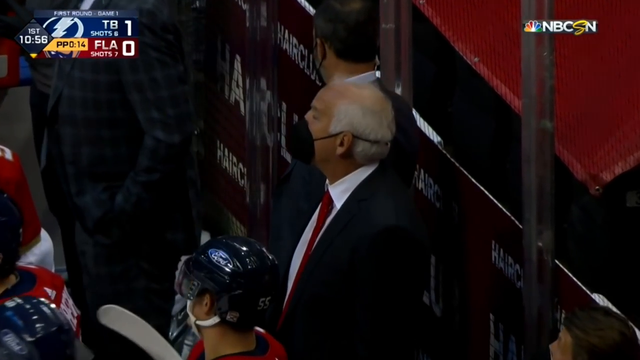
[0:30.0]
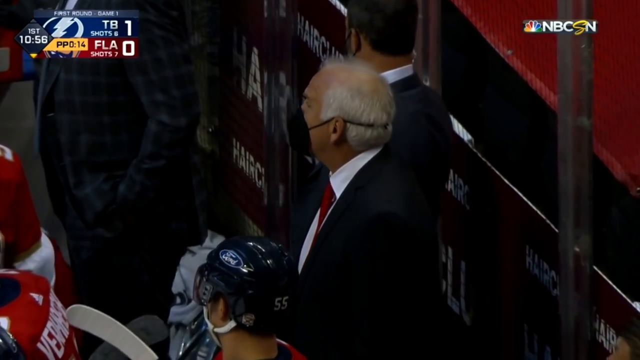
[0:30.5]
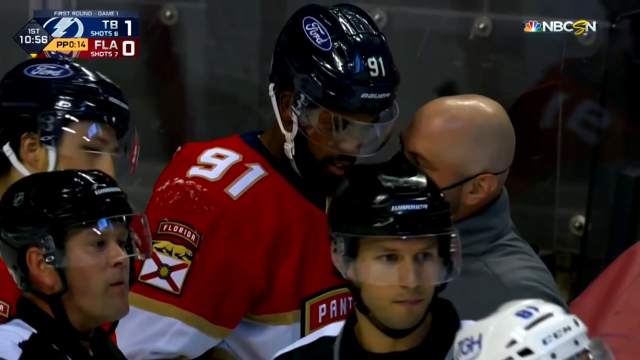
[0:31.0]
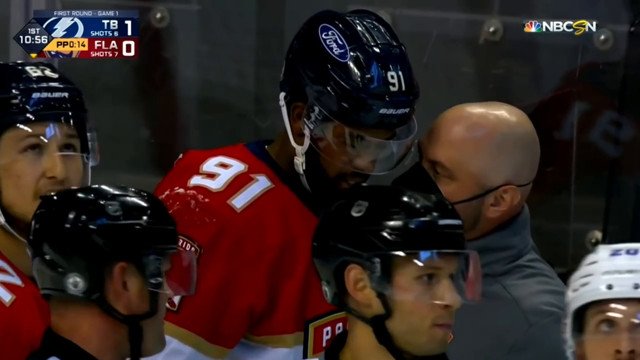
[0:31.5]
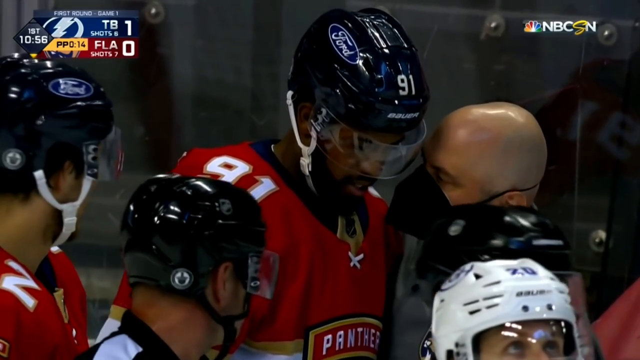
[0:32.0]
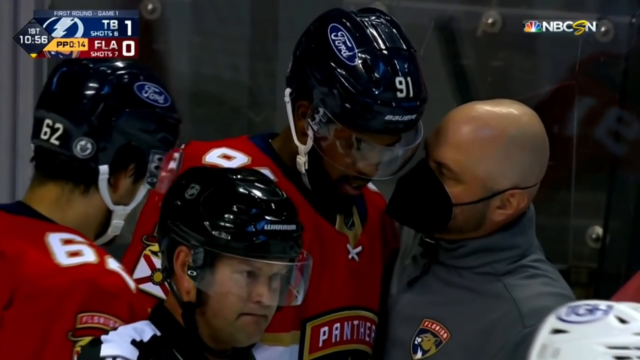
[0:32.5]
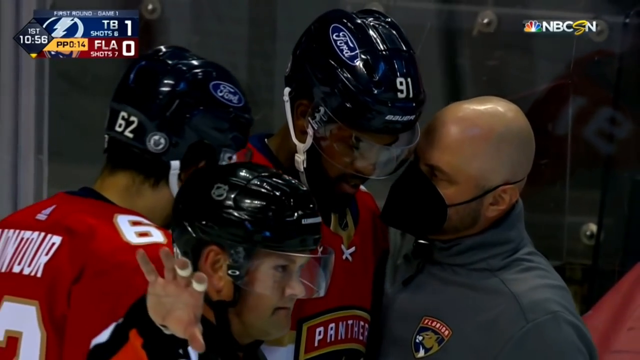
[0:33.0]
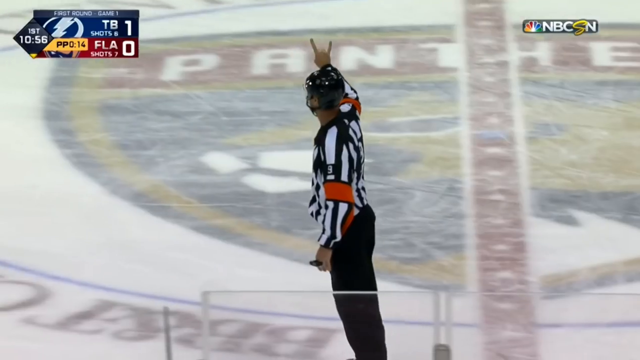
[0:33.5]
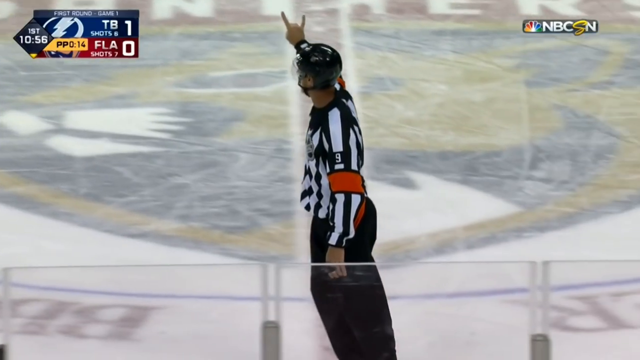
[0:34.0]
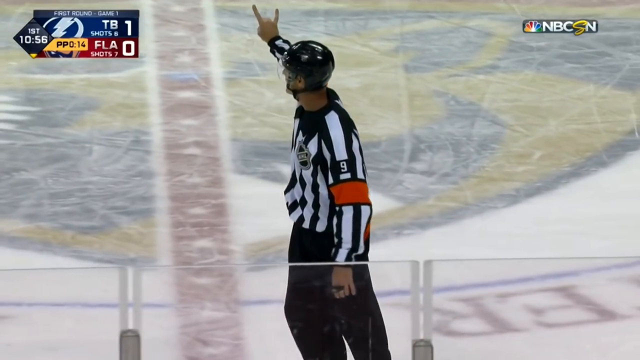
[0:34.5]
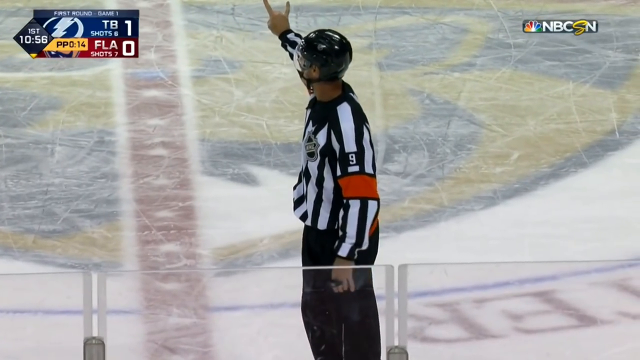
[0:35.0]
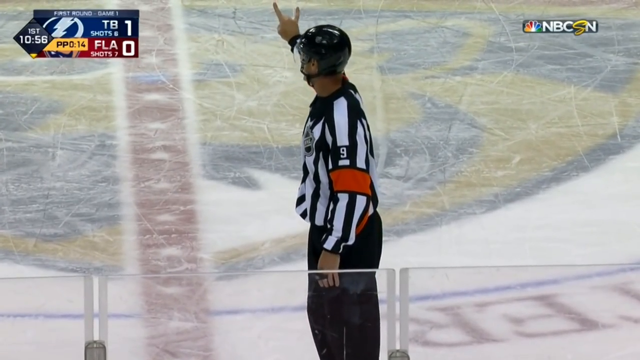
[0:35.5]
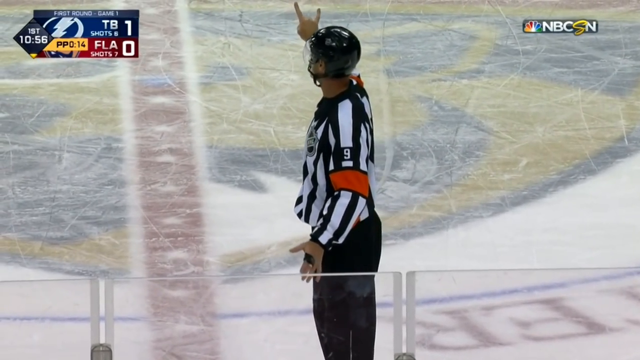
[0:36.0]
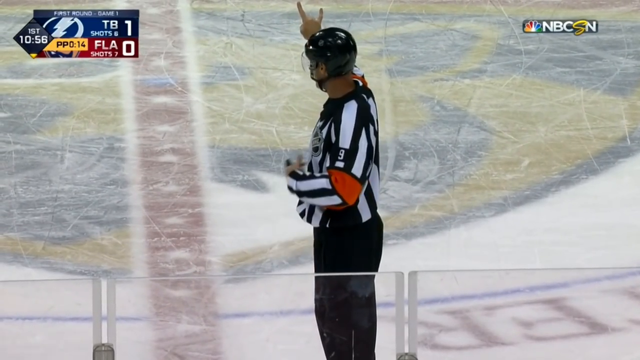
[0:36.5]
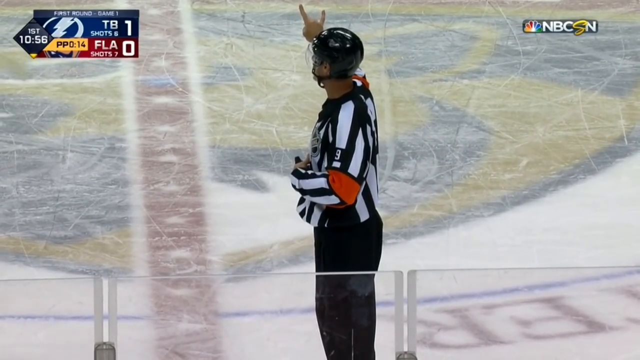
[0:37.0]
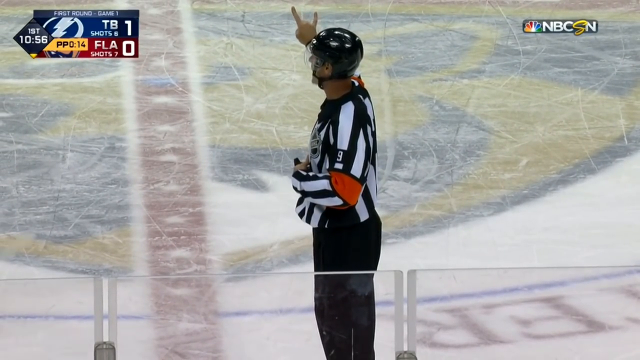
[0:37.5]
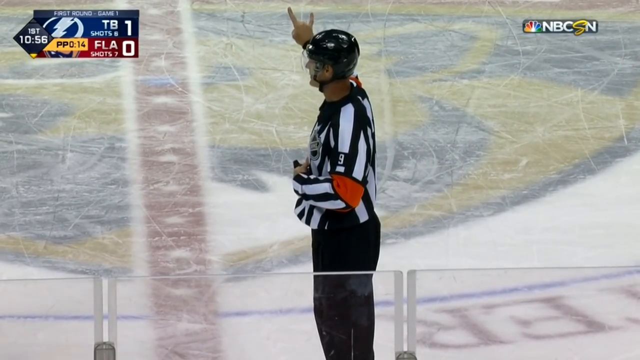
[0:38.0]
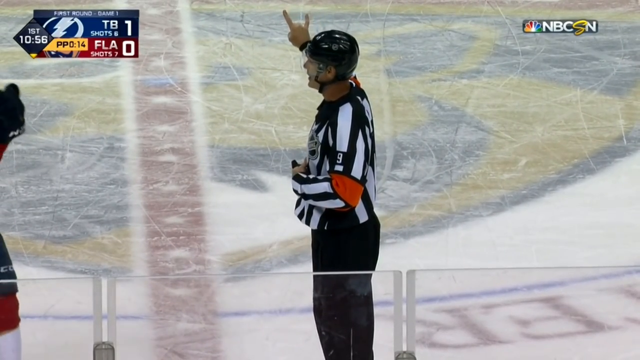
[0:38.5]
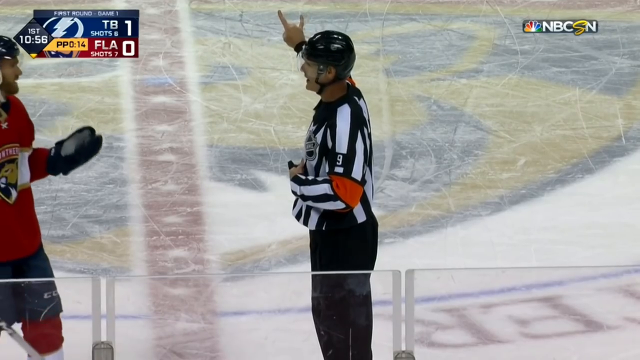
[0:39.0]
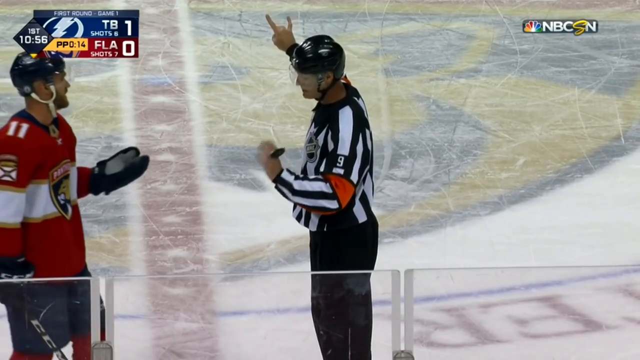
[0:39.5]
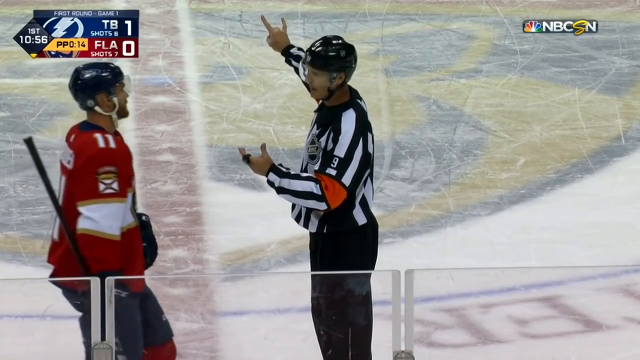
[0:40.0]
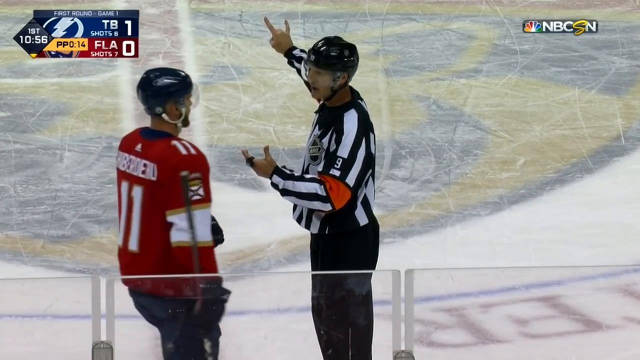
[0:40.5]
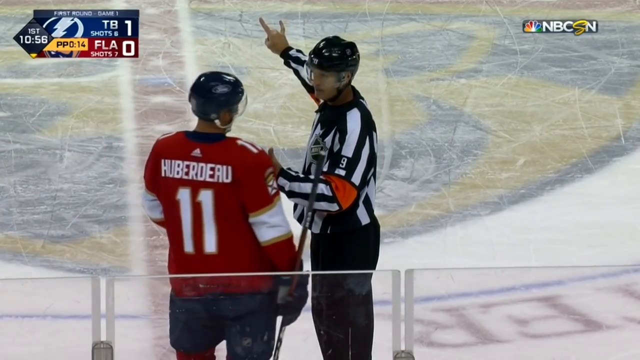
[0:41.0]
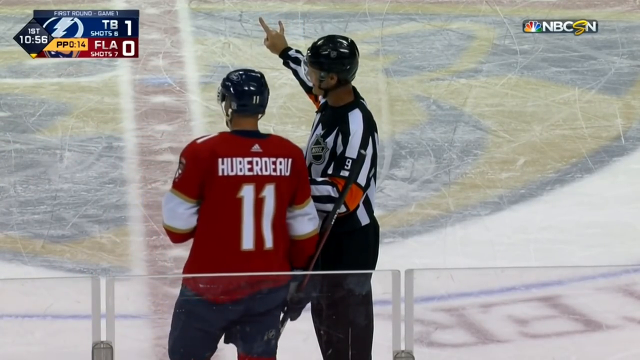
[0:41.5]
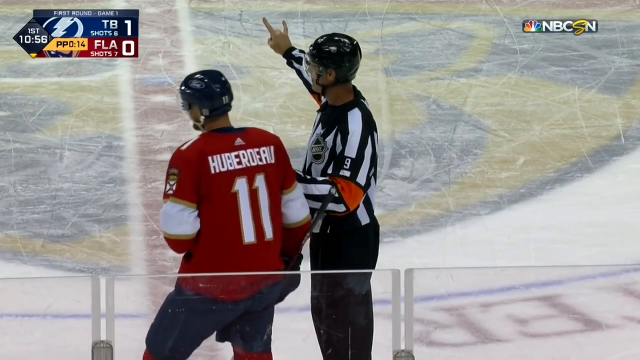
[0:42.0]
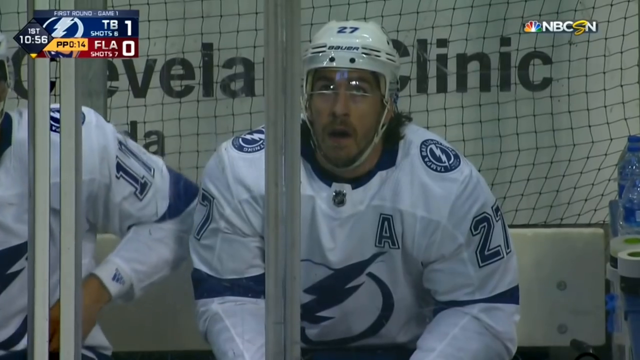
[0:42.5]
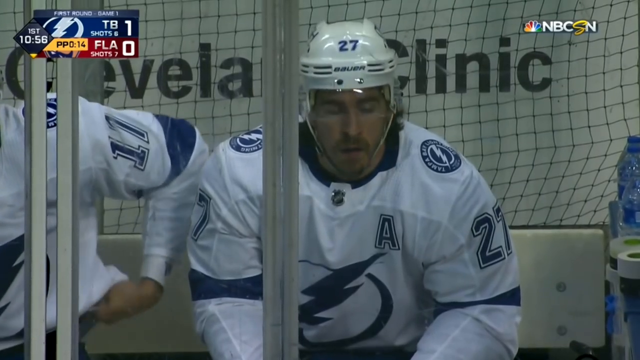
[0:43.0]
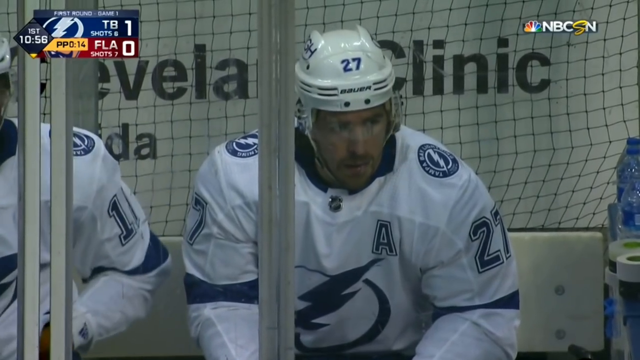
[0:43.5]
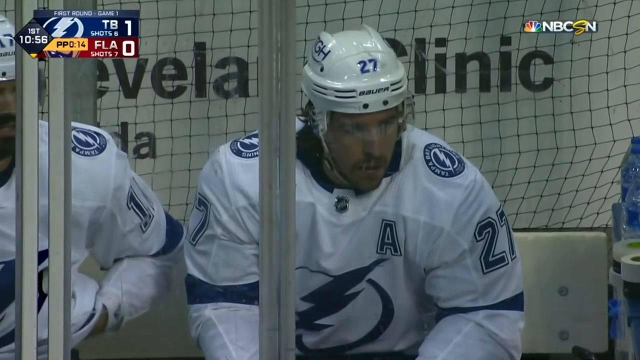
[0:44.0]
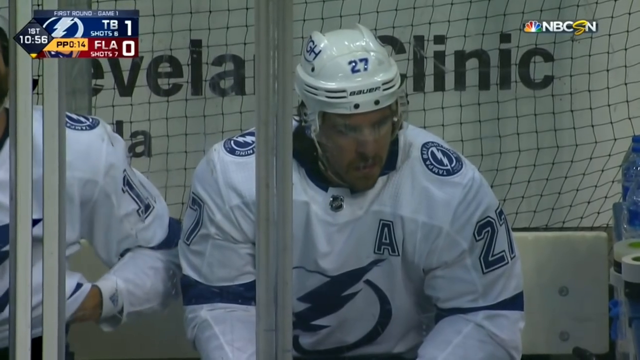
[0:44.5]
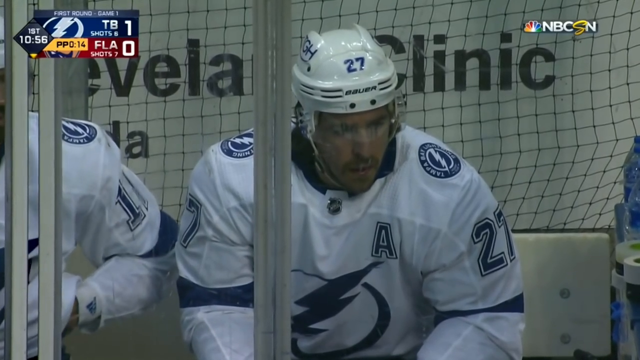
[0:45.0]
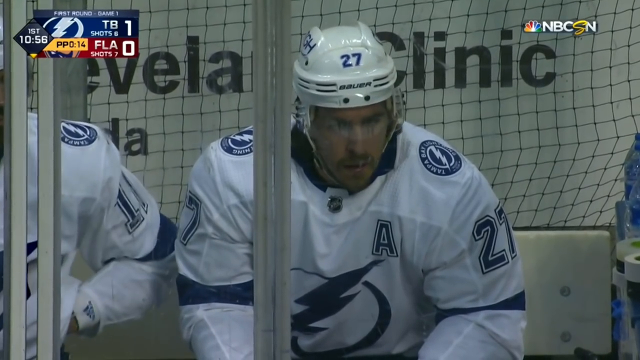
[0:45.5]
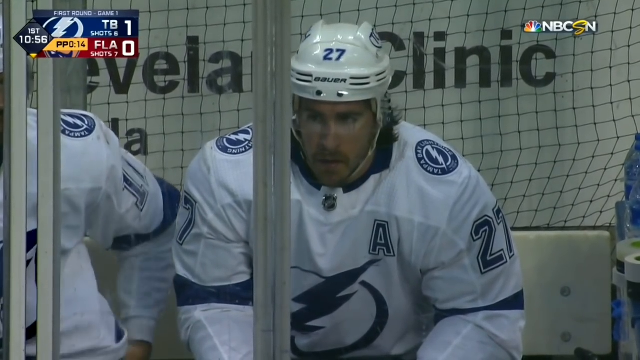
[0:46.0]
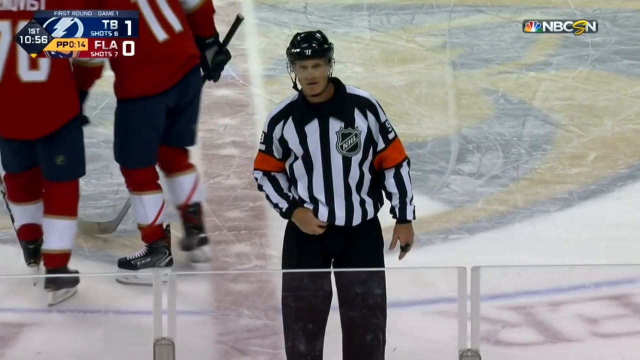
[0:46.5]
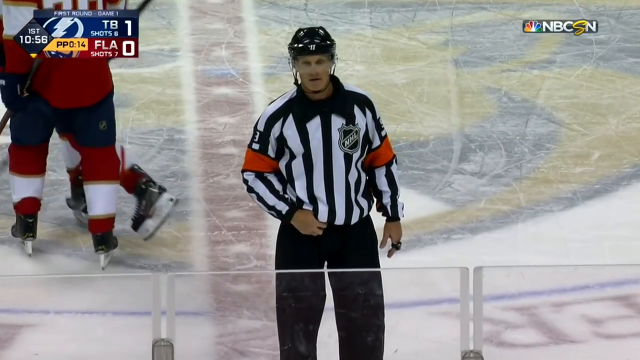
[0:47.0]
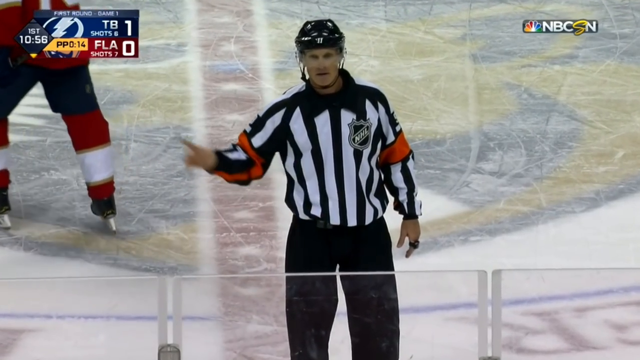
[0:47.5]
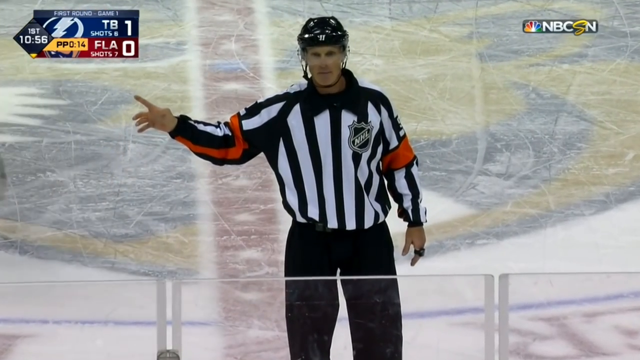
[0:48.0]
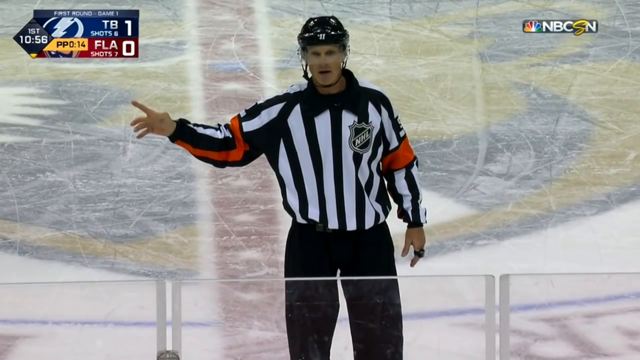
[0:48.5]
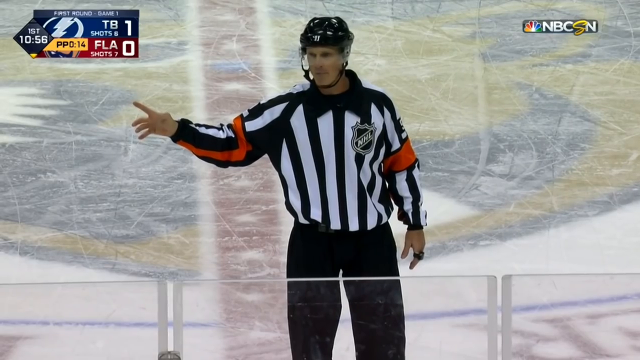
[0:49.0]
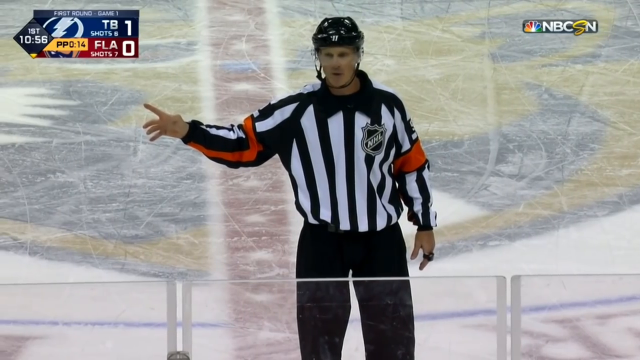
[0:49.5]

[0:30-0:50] A referee skates backwards and holds up two fingers as one of the Florida players approaches him. The referee then appears to make some sort of call, pointing to his right, the viewer's left. He has an orange band around his left elbow. The shot cuts to a player who appears to be sitting in the penalty box, then cuts back to what appears to be one of the team managers or perhaps an owner. He wears a dark suit, maybe black, with a white shirt and a red tie, and a black face covering as if this is in the COVID era. The players wear black helmets with black and blue emblems on the very top. The score remains 1-0.